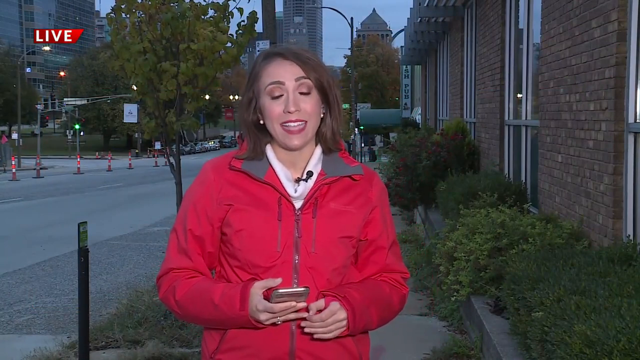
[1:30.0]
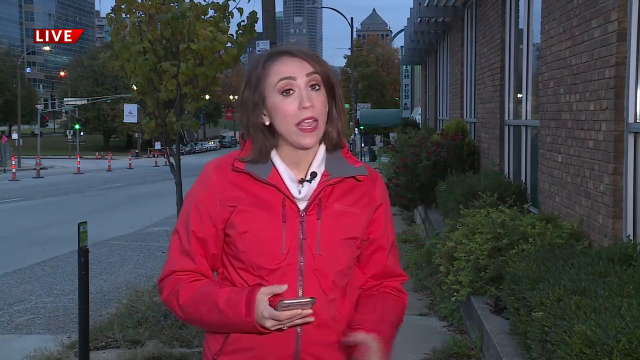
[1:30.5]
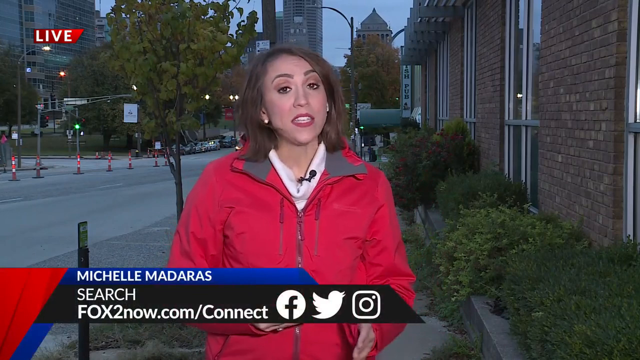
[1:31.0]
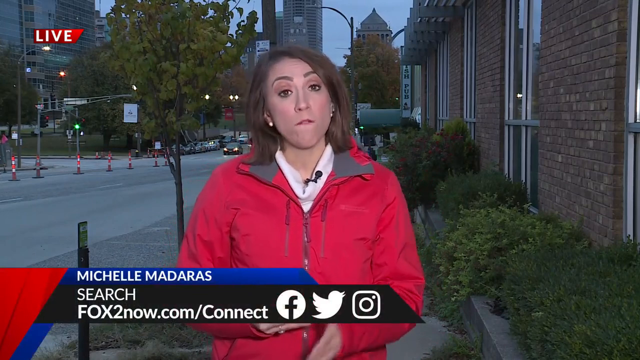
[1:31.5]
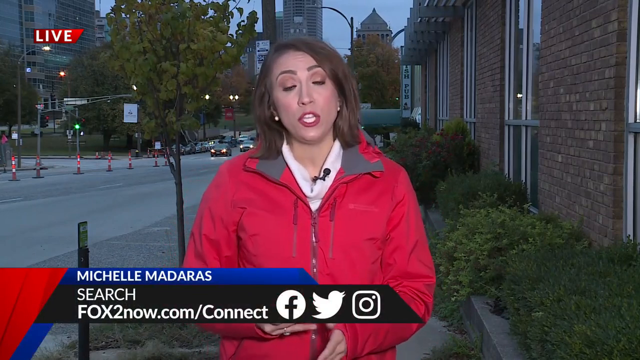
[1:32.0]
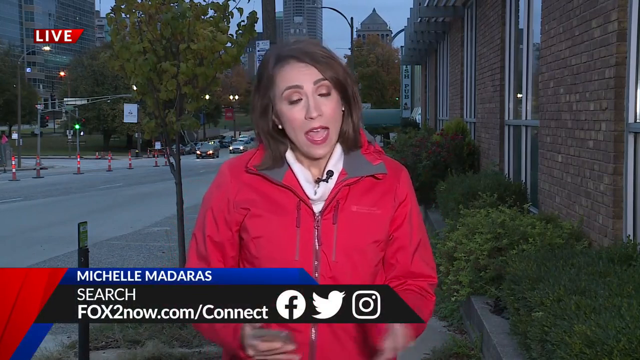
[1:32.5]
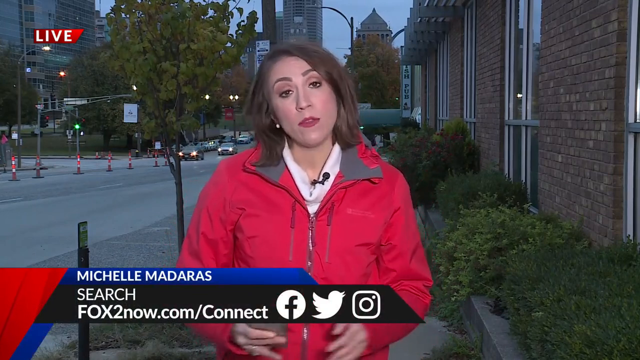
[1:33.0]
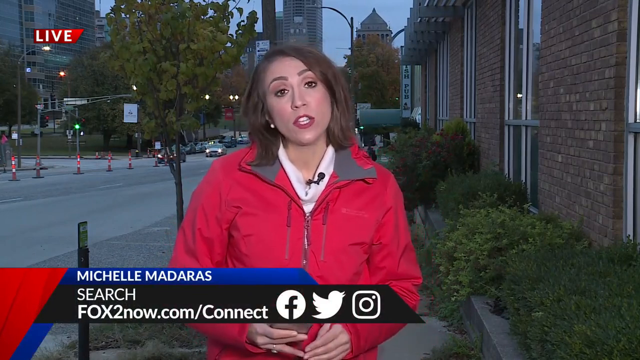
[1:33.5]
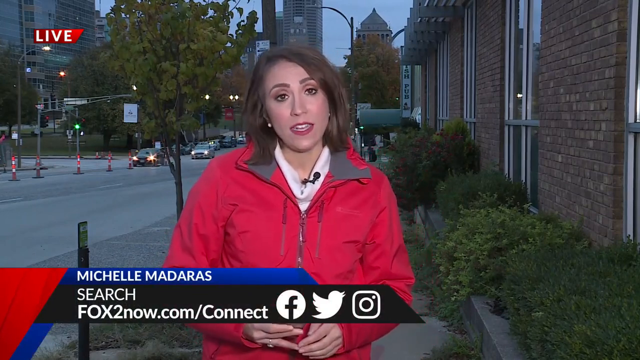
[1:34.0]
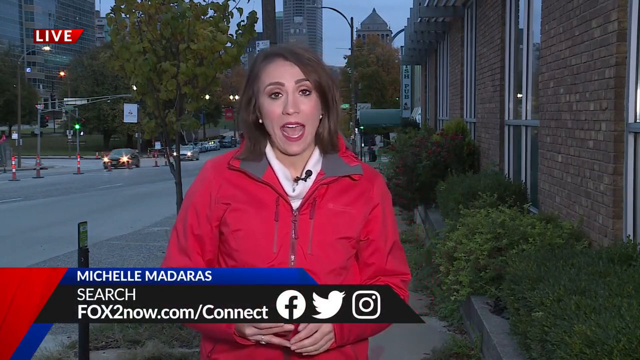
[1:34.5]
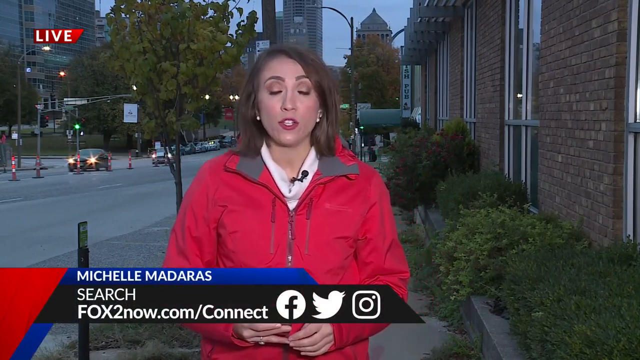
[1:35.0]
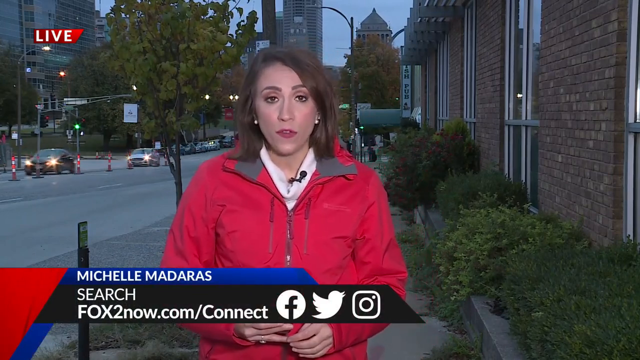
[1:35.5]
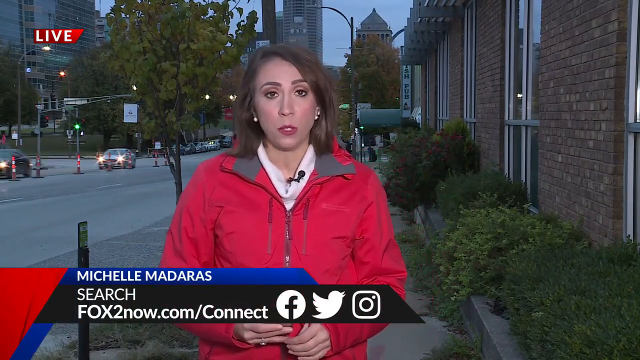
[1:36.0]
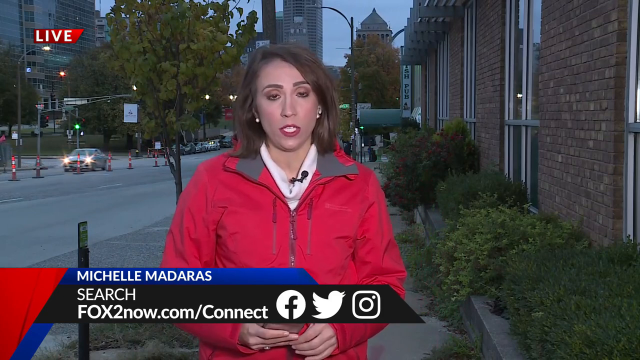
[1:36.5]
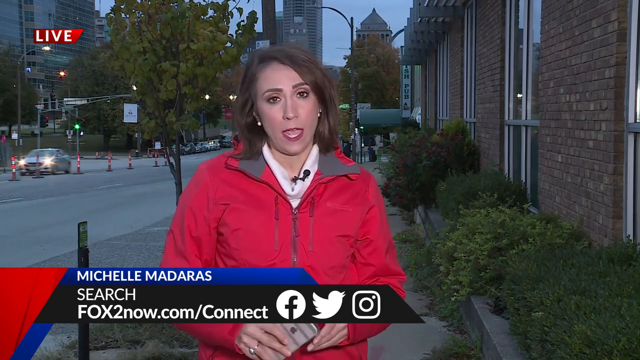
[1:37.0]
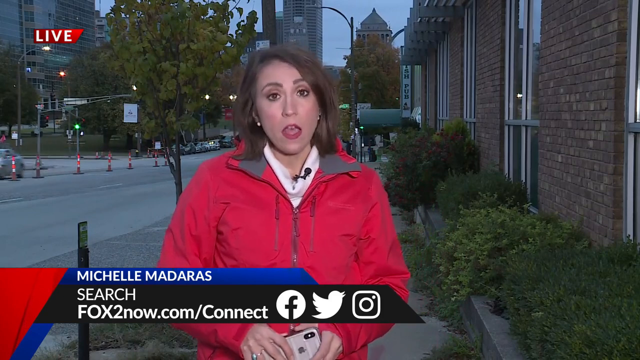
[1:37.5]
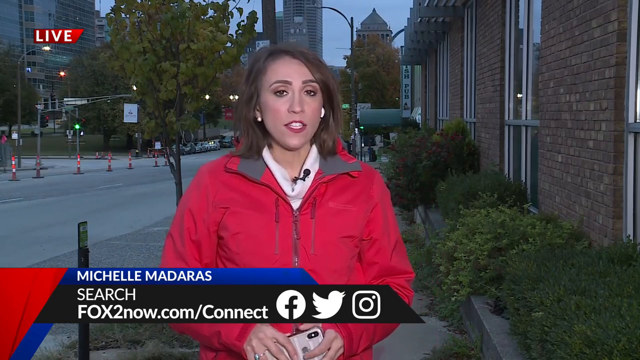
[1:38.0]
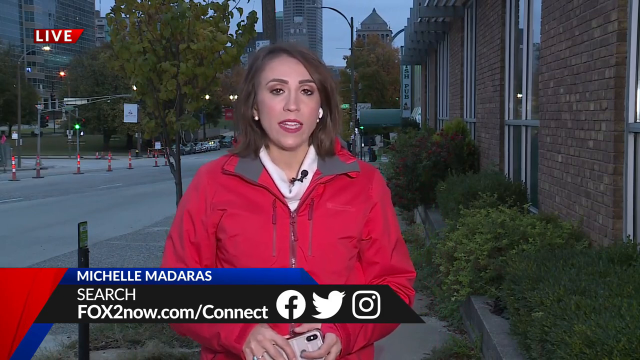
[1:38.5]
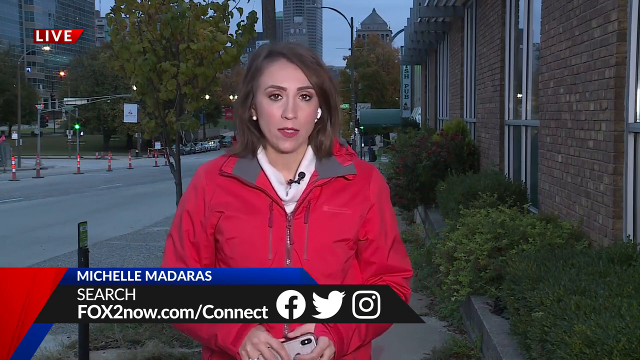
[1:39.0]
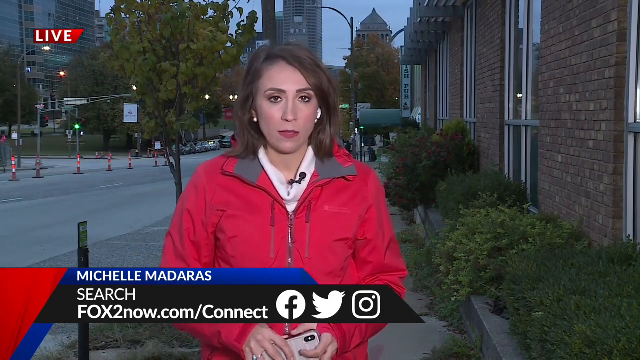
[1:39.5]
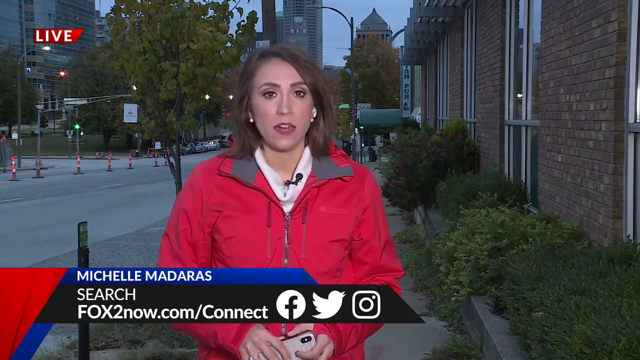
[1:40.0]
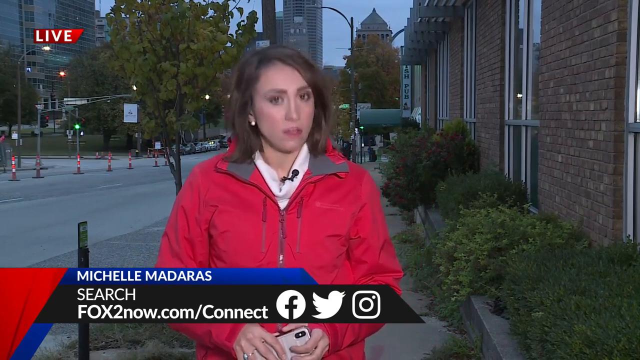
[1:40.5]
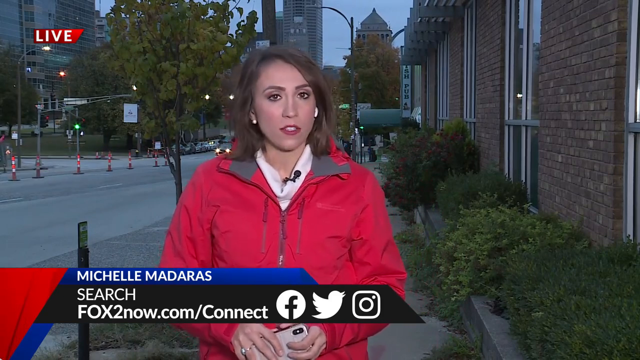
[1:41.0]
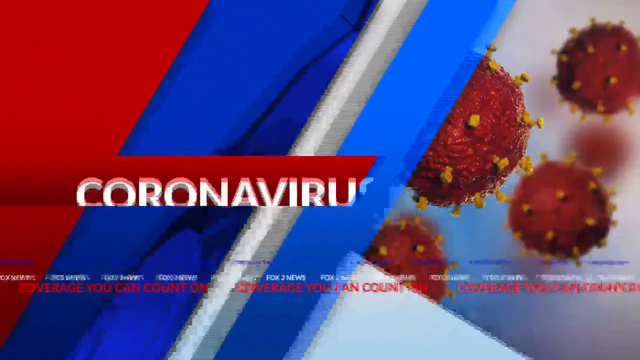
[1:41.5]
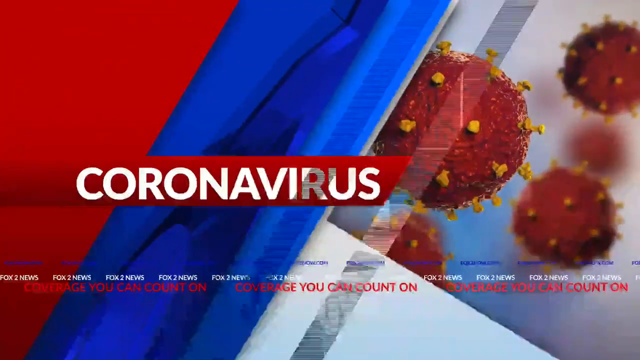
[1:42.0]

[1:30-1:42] The reporter from the start appears in a red jacket; she seems to be Michele Madaras. Below her are a search option and social media platforms, including Facebook, Twitter and Instagram. Cars continue to move behind her. She seems to be explaining something and fiddles with her phone. A heading reading "coronavirus" then appears, with red colors.